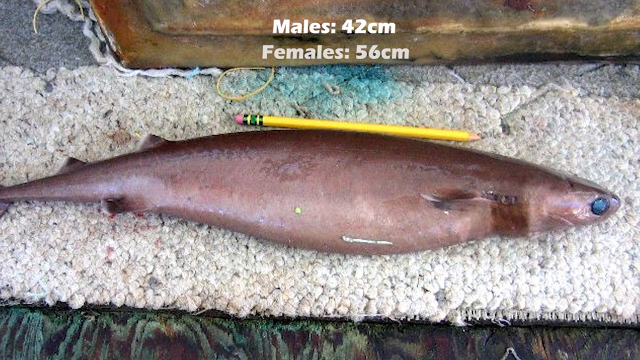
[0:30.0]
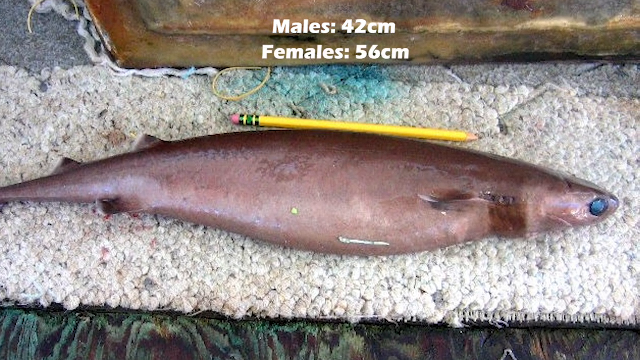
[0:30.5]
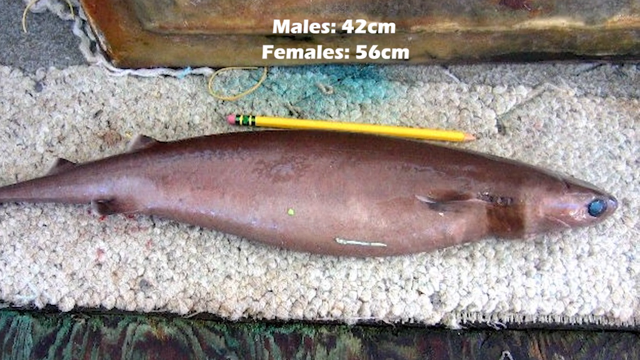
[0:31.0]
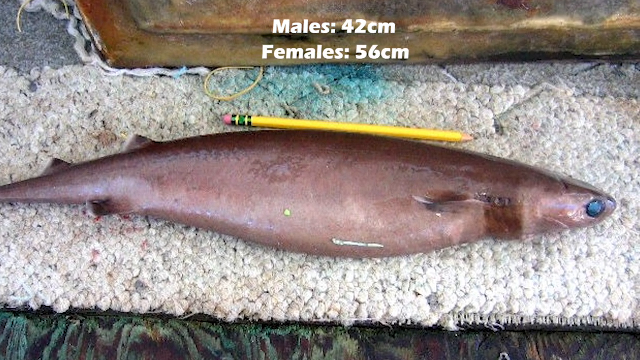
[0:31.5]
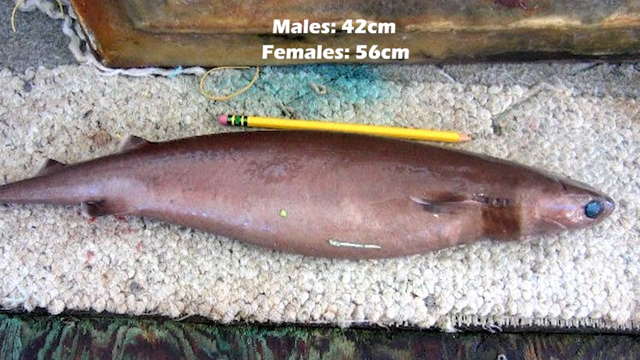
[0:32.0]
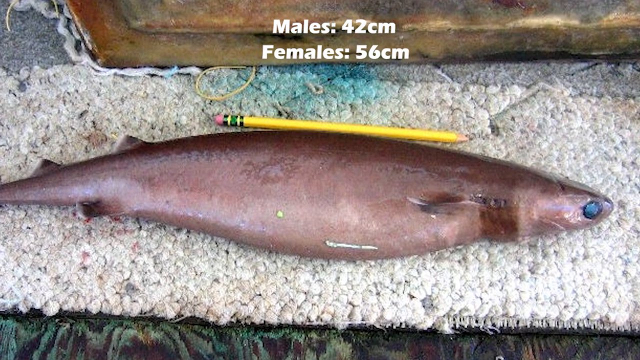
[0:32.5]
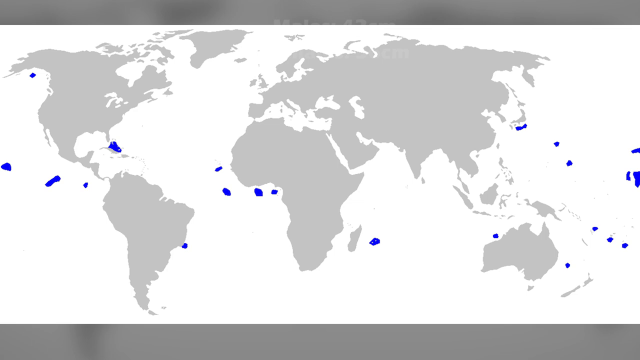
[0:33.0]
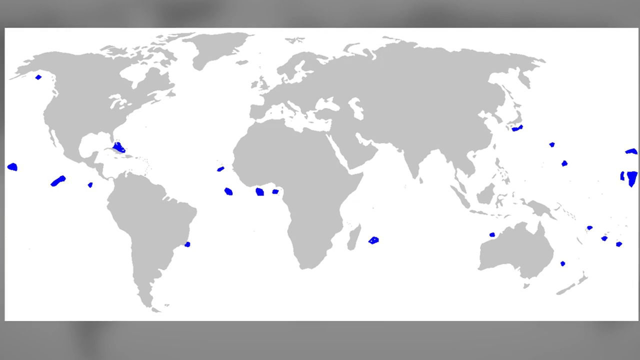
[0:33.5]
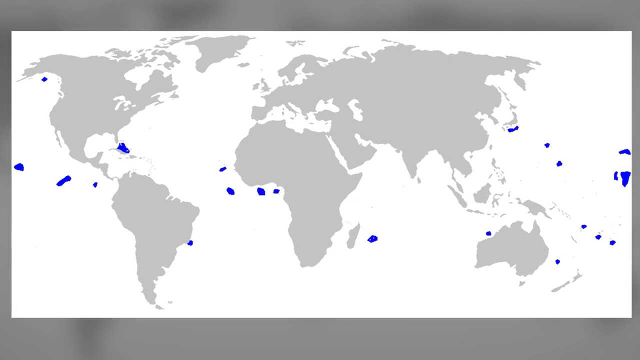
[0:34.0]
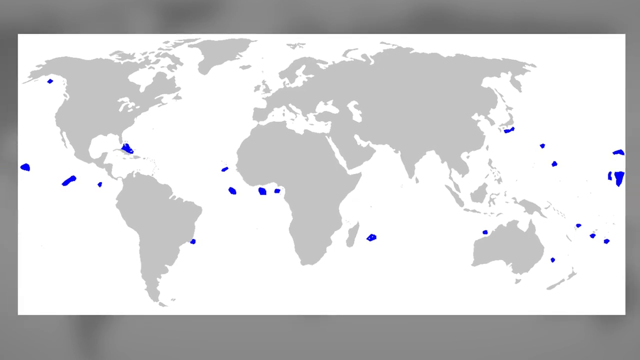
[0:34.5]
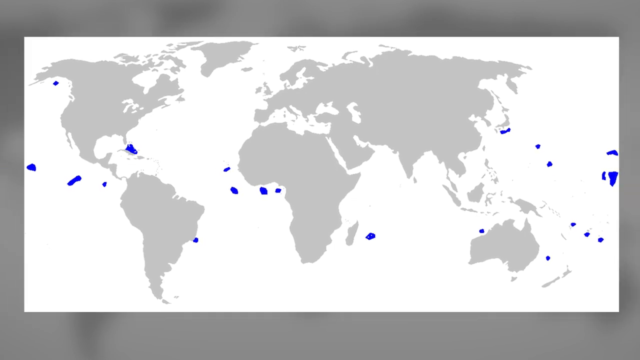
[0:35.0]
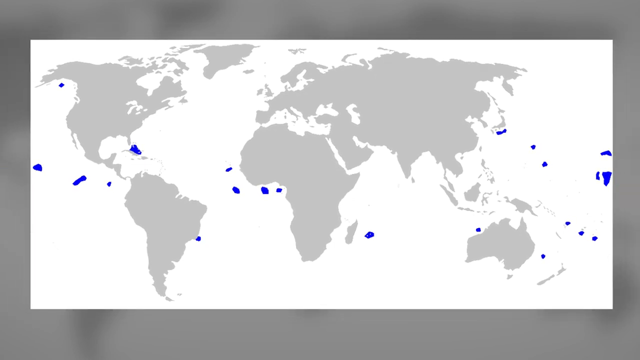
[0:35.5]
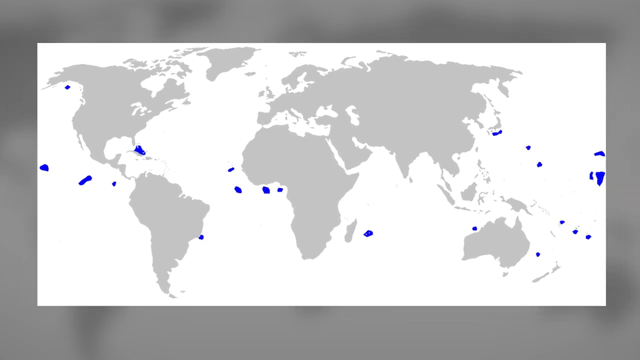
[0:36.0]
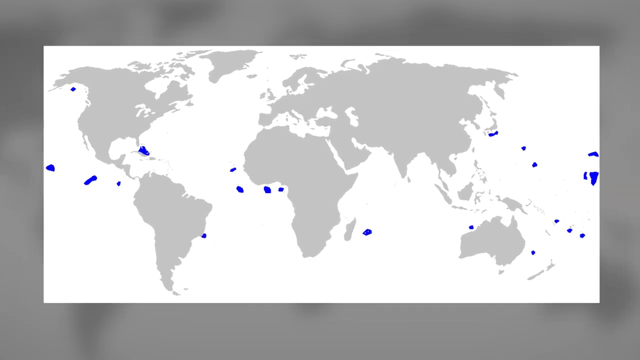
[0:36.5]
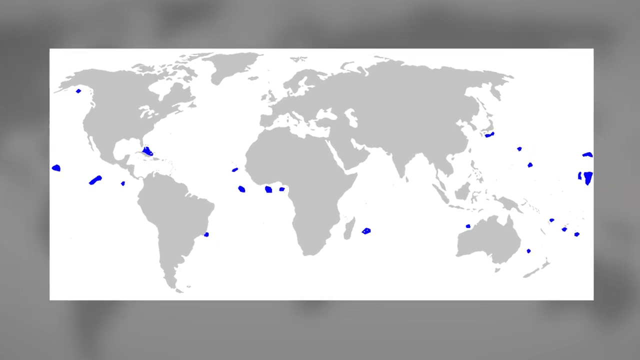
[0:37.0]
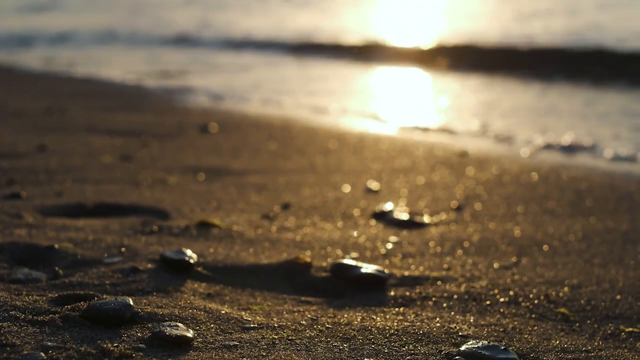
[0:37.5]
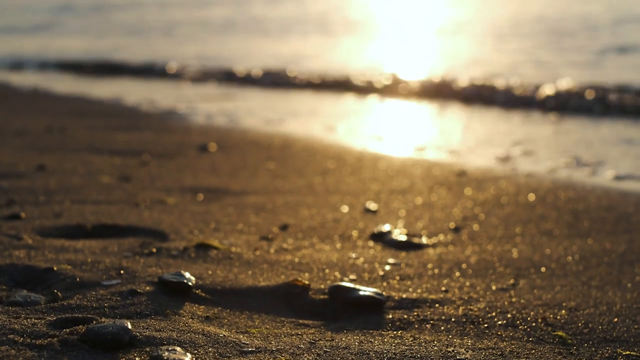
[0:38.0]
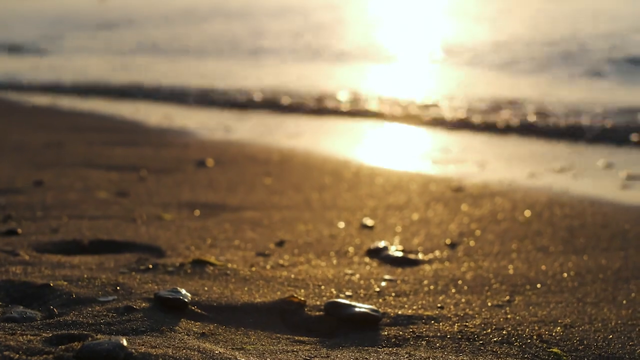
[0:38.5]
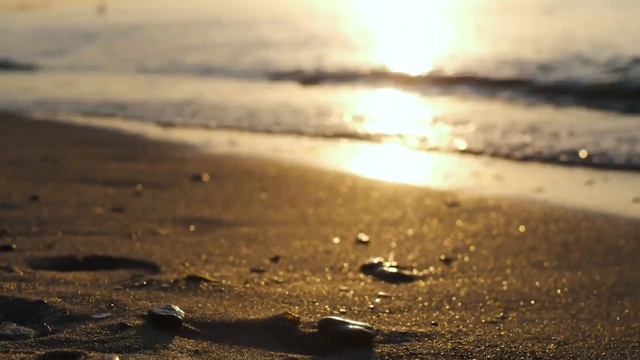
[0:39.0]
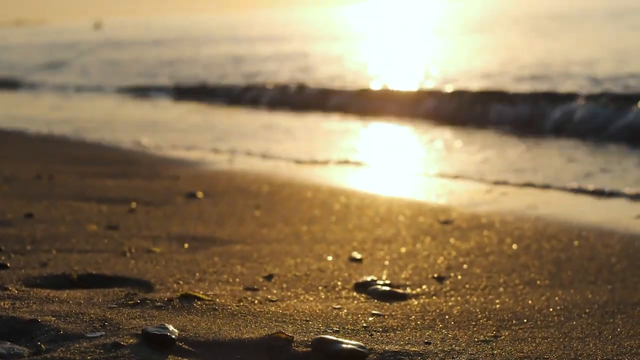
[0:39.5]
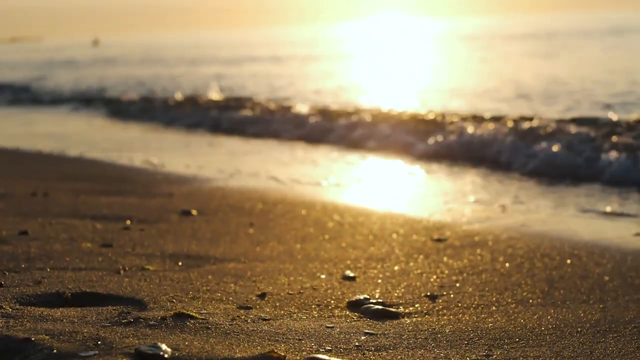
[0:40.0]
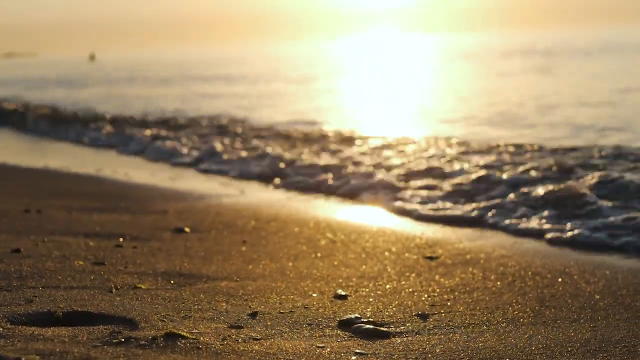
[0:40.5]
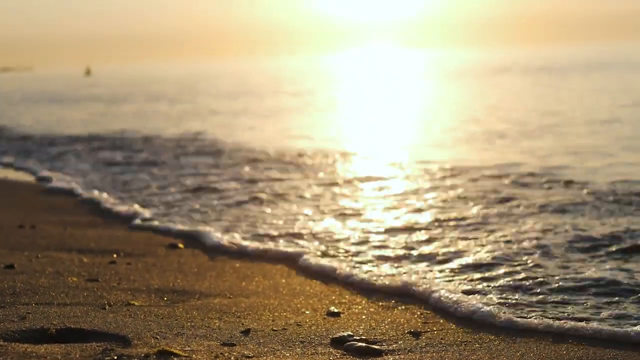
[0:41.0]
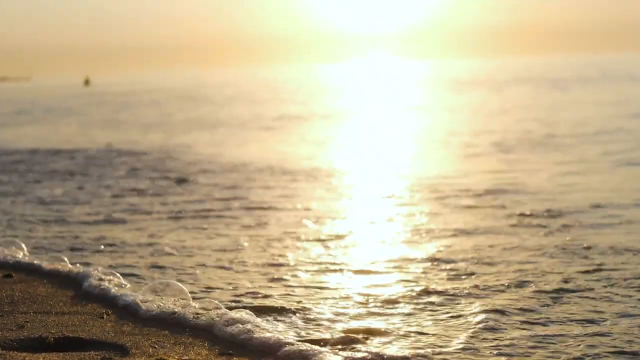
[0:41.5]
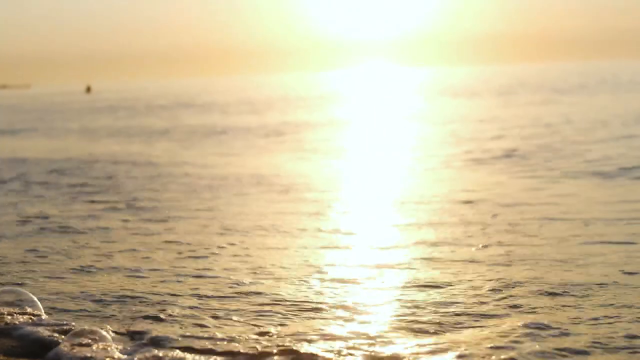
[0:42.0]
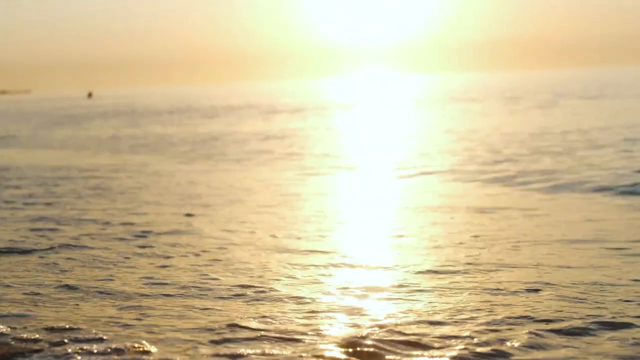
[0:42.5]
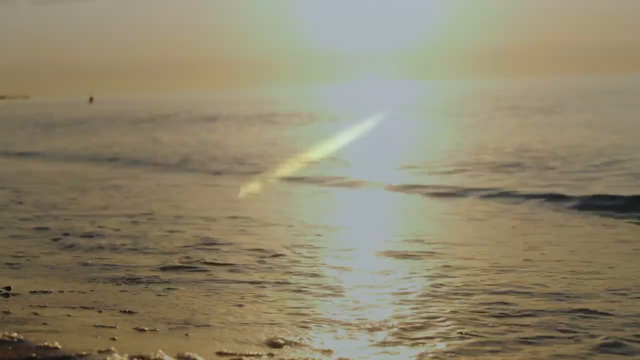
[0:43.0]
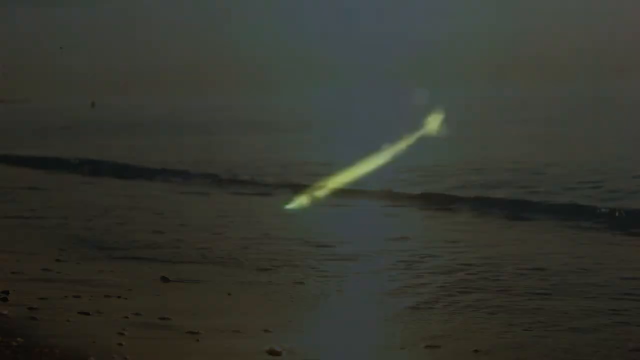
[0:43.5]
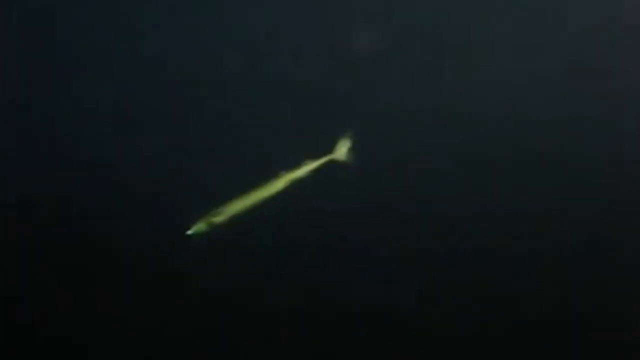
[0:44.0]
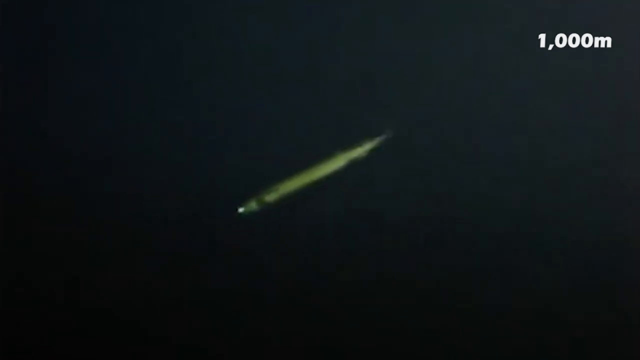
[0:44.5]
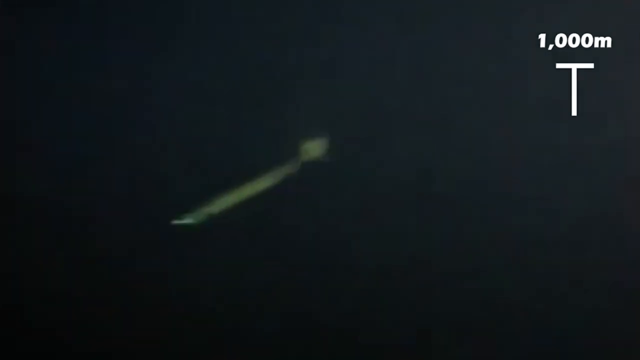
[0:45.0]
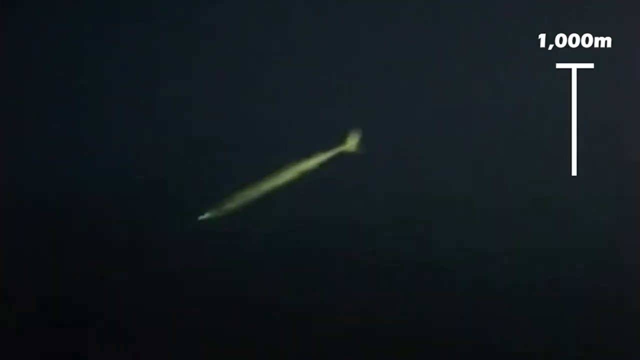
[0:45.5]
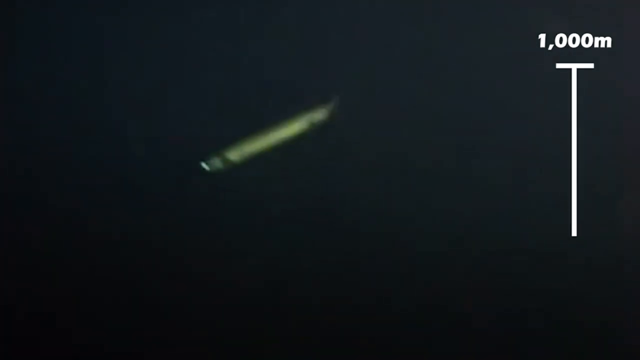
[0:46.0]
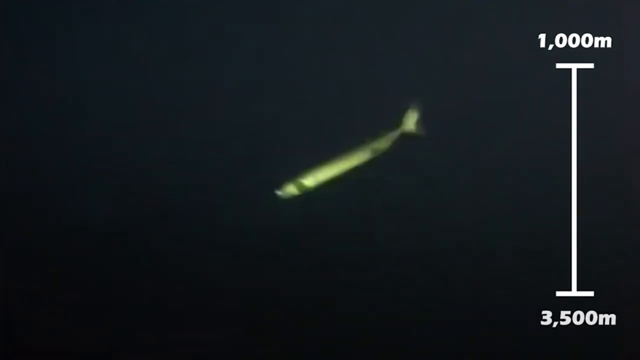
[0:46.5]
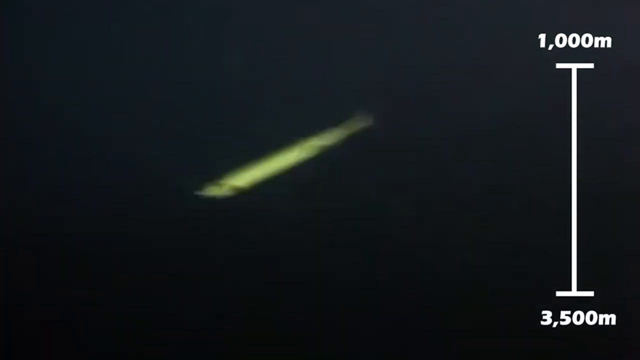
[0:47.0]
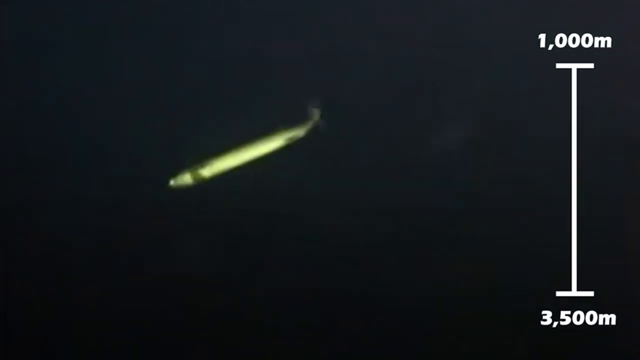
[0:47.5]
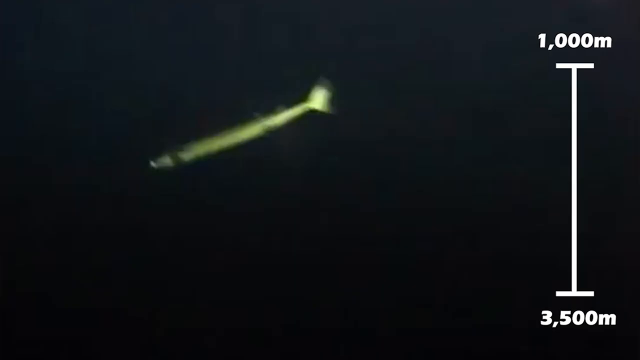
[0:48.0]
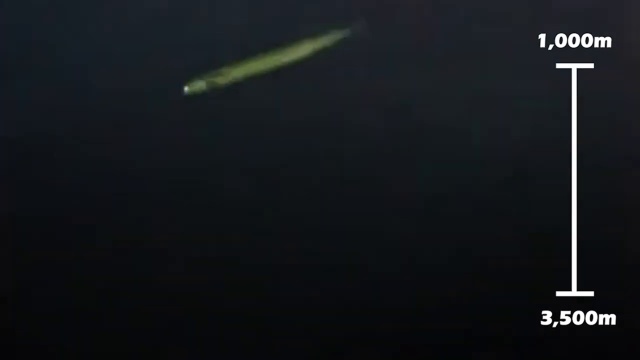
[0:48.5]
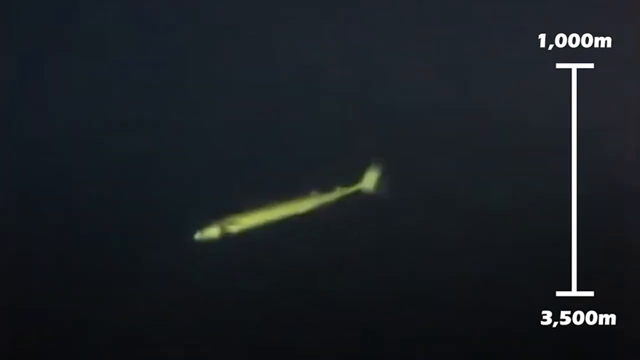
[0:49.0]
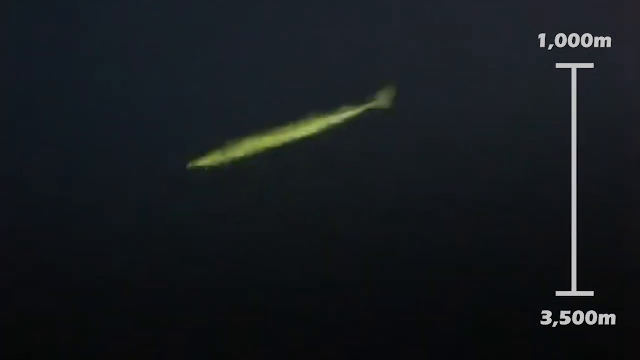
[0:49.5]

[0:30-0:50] Information about the males and females of the species is shown: the males are around 42 centimeters and the females around 56 centimeters. Different footage and information related to how far these animals travel follows. Images show animals that have either been caught or dried up on the shore.